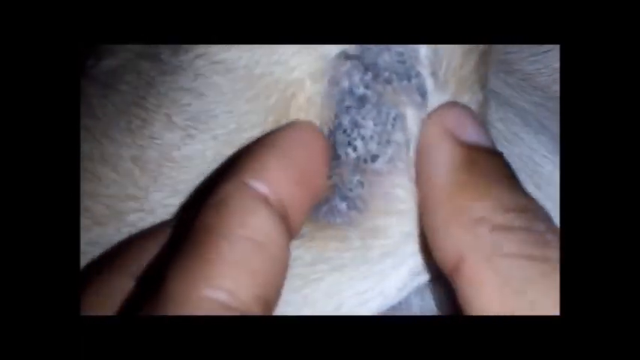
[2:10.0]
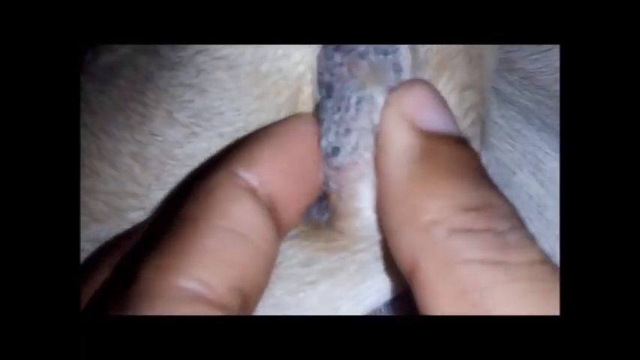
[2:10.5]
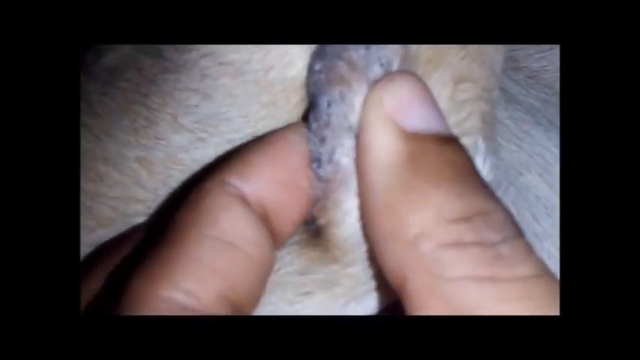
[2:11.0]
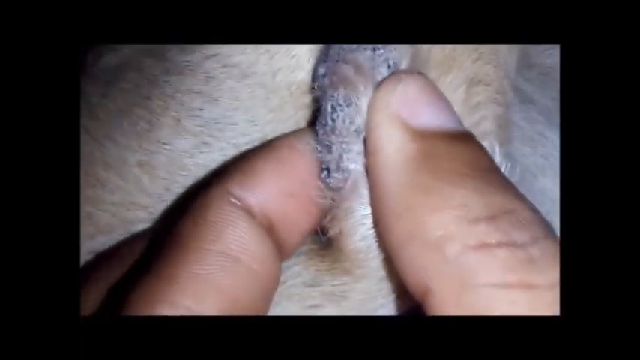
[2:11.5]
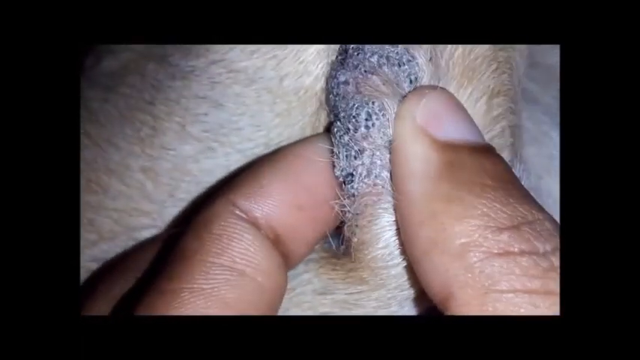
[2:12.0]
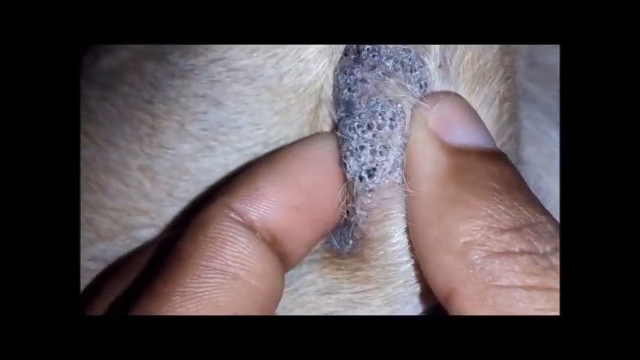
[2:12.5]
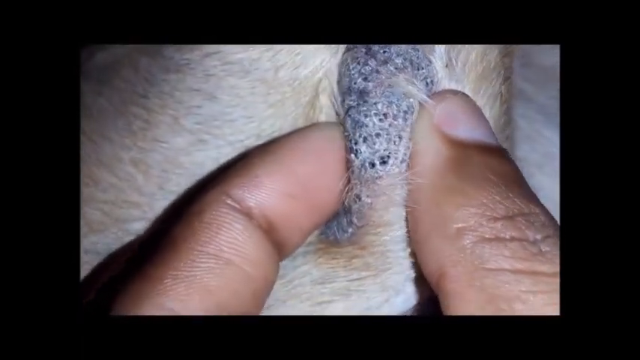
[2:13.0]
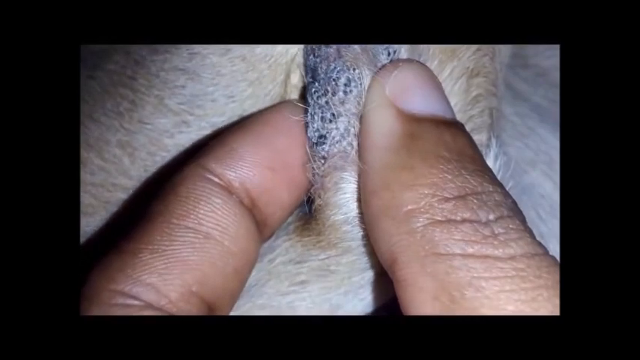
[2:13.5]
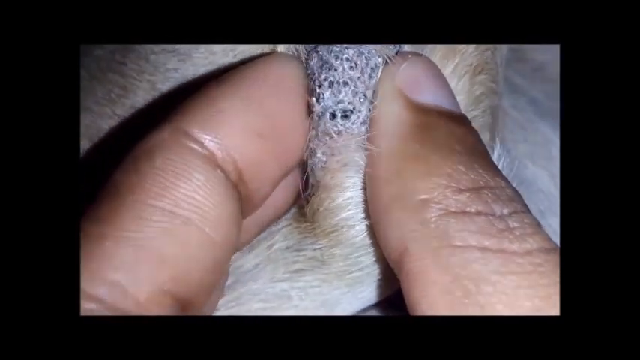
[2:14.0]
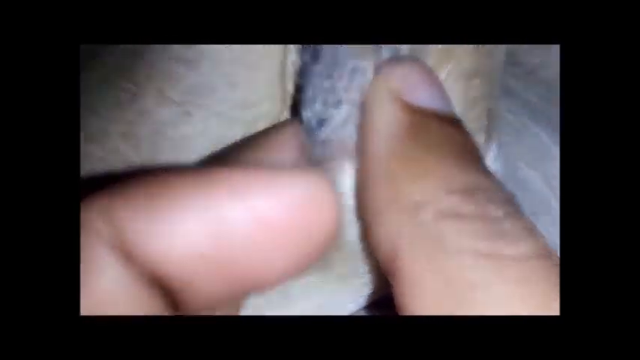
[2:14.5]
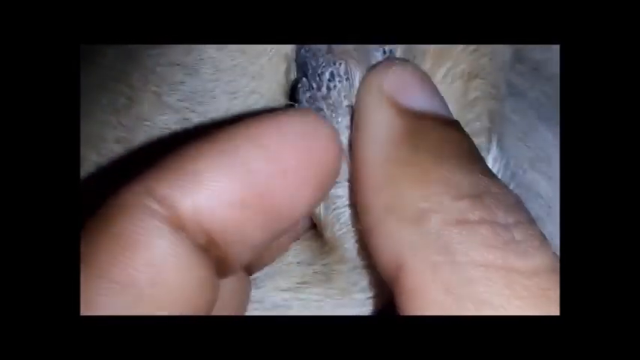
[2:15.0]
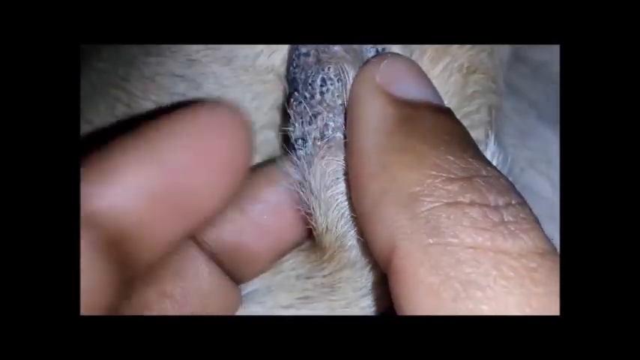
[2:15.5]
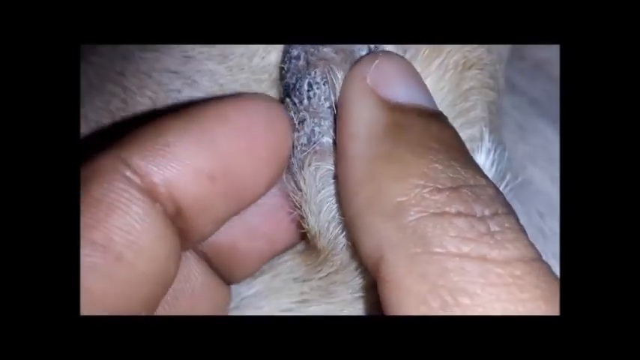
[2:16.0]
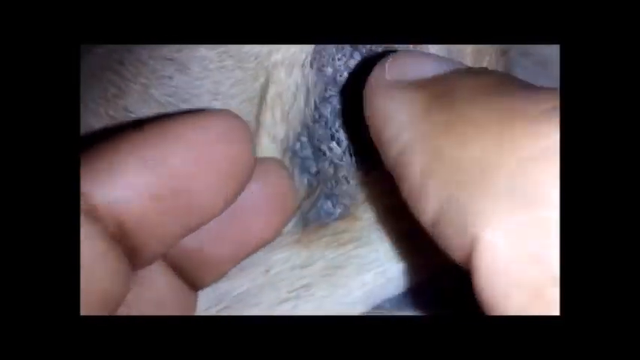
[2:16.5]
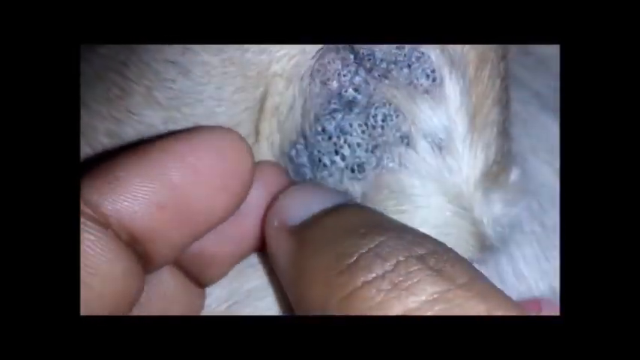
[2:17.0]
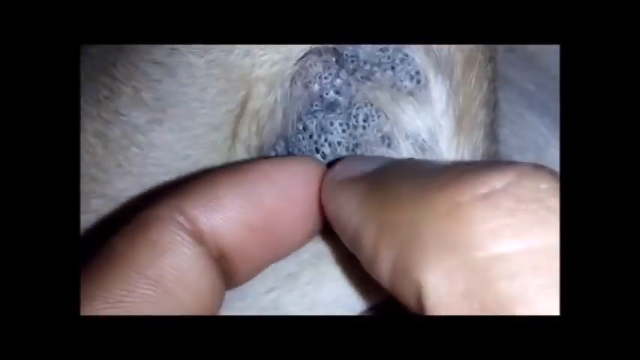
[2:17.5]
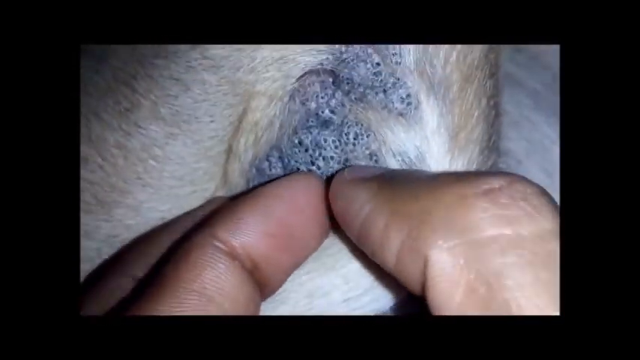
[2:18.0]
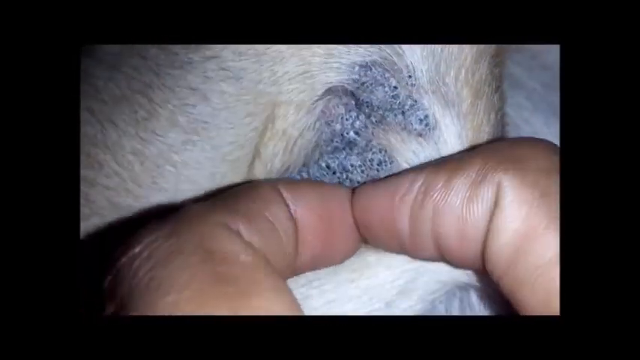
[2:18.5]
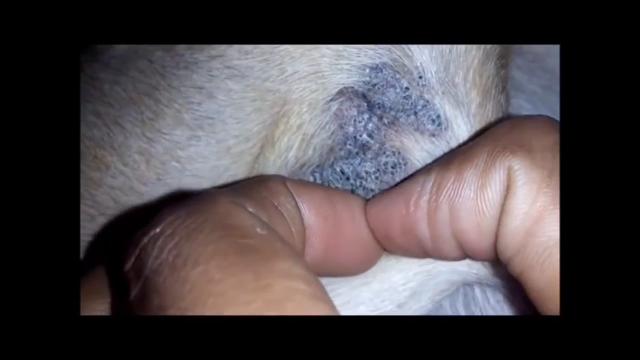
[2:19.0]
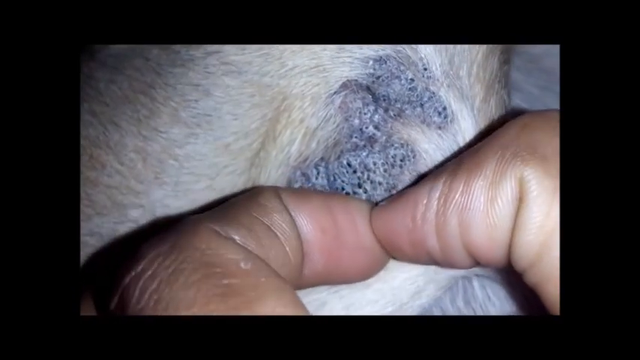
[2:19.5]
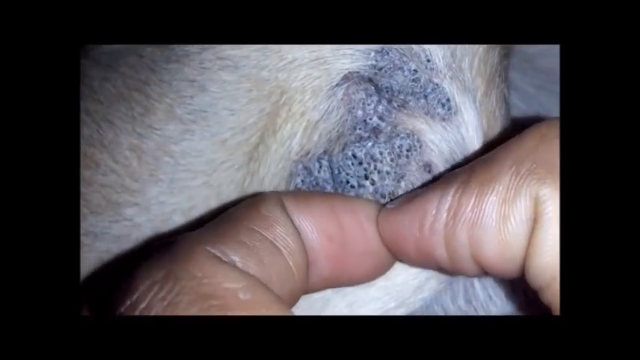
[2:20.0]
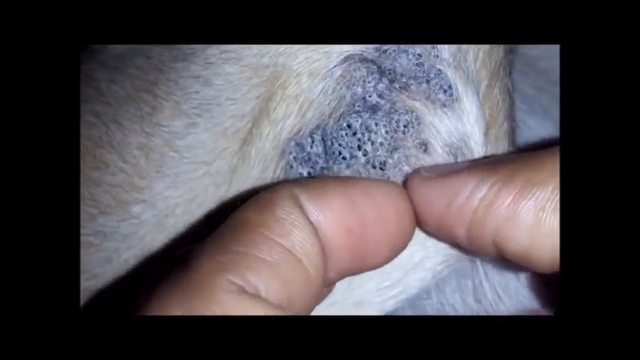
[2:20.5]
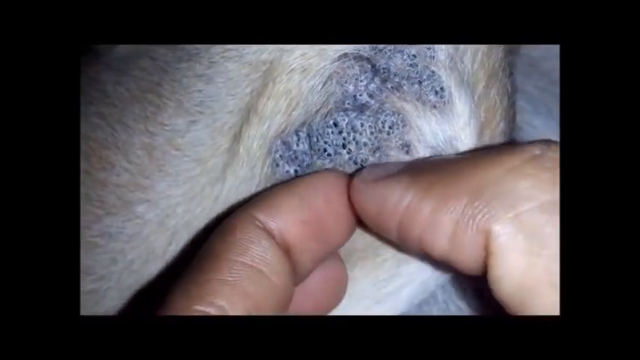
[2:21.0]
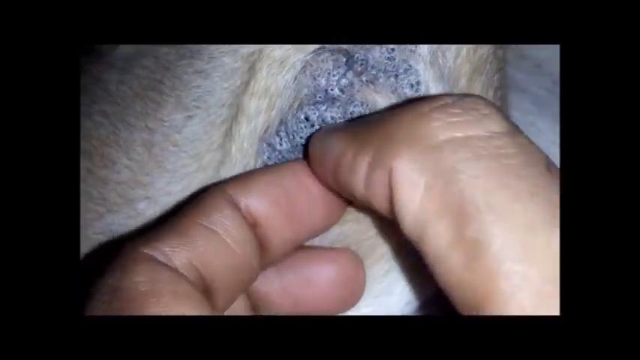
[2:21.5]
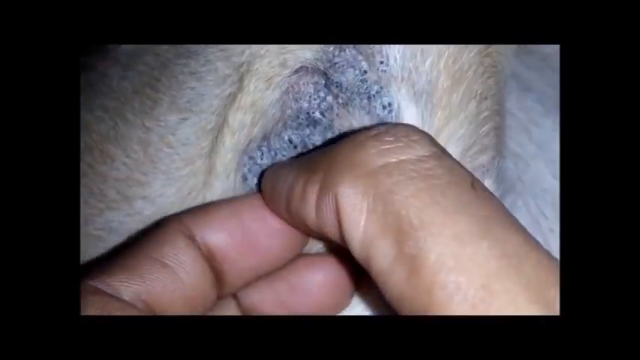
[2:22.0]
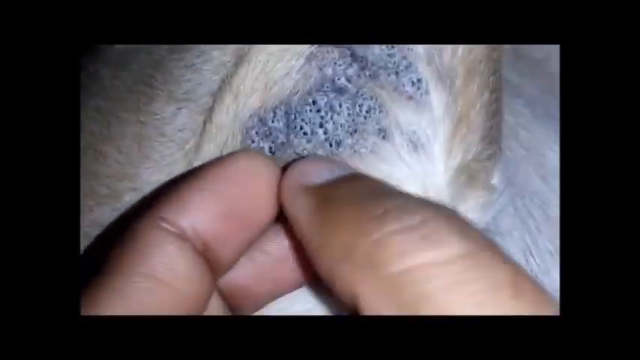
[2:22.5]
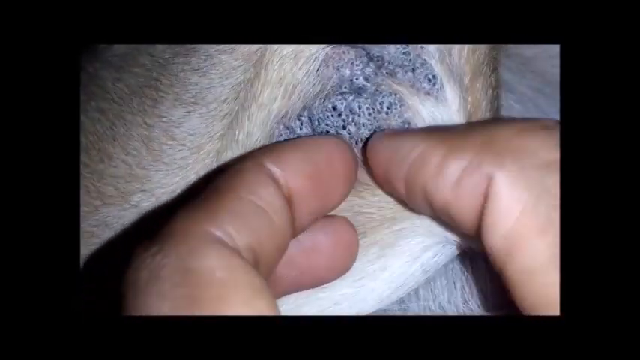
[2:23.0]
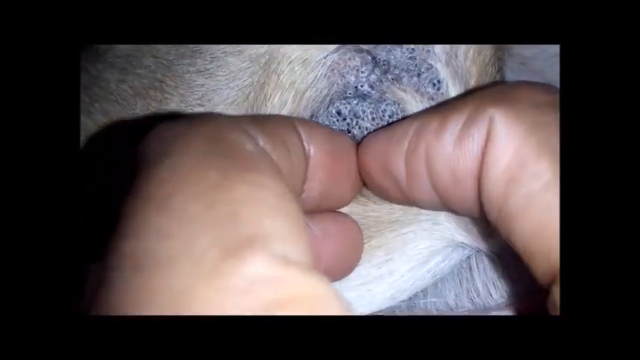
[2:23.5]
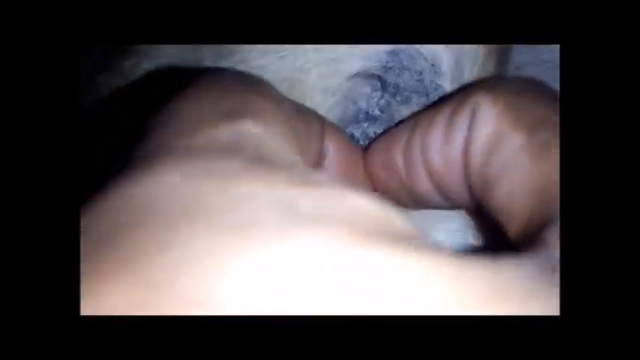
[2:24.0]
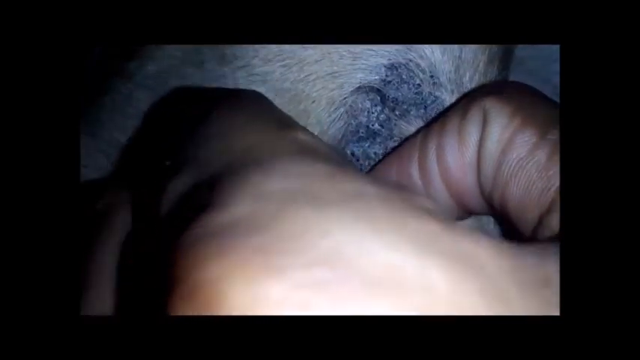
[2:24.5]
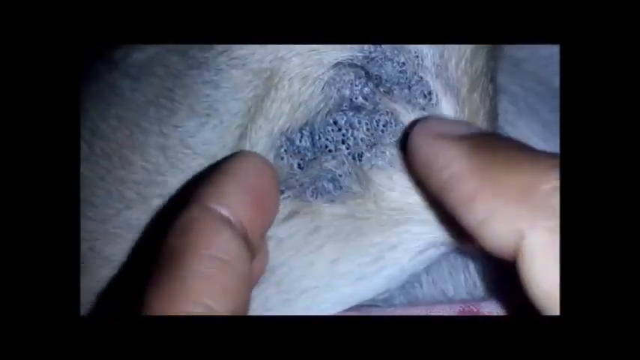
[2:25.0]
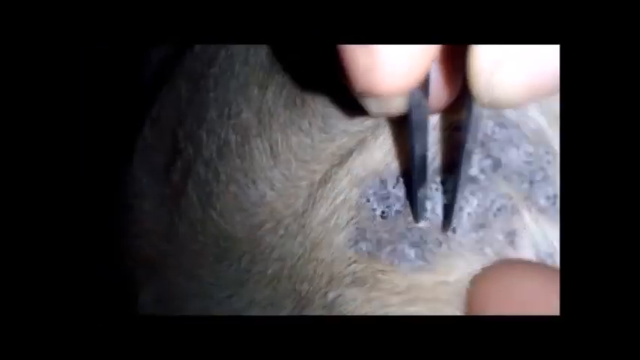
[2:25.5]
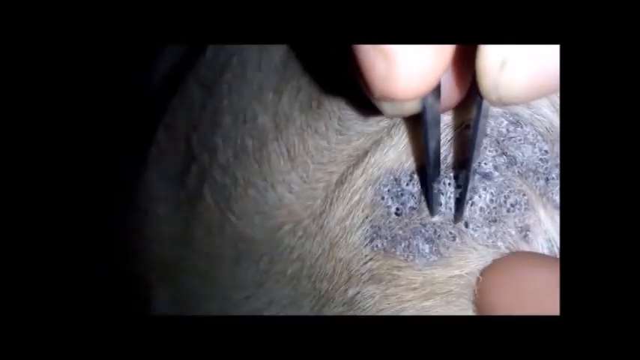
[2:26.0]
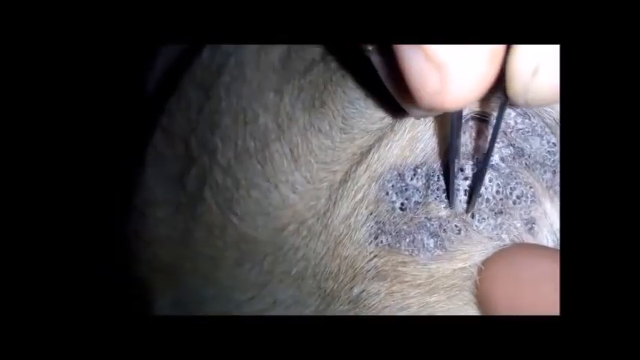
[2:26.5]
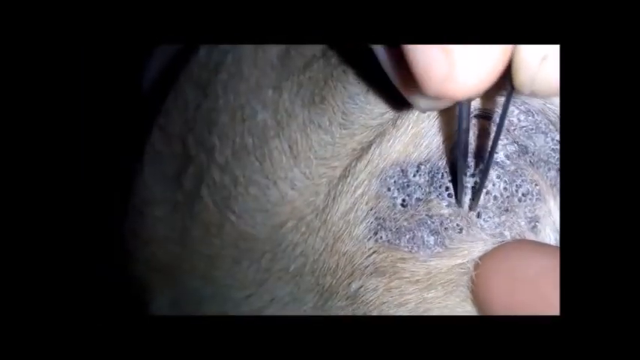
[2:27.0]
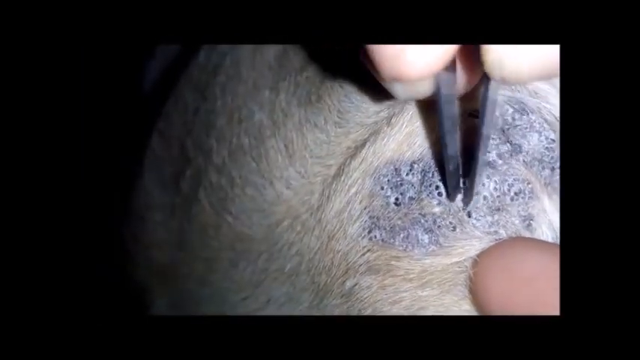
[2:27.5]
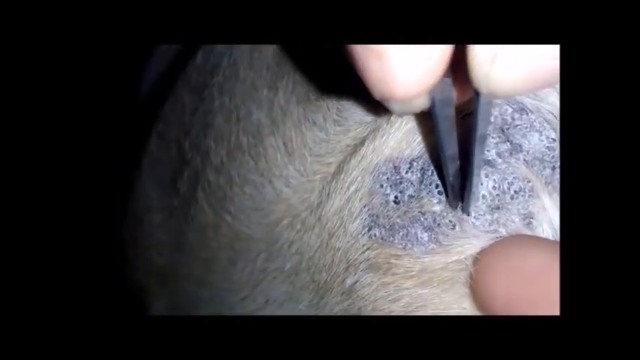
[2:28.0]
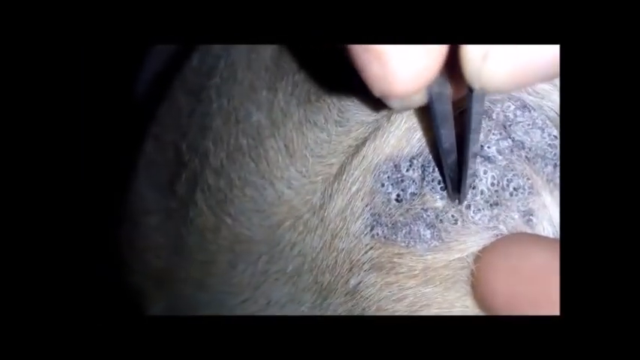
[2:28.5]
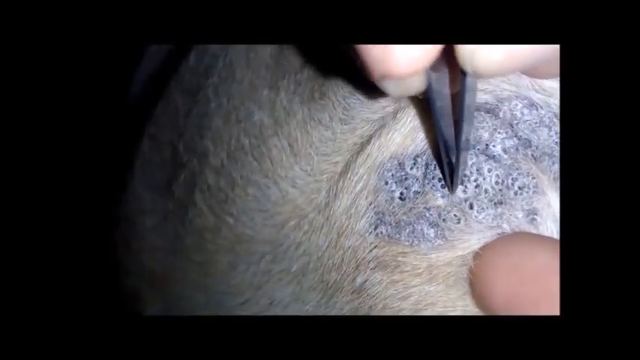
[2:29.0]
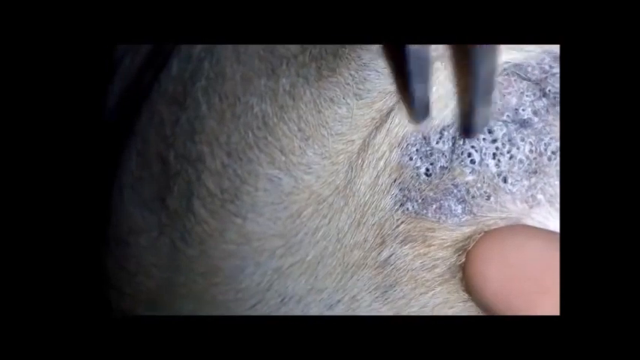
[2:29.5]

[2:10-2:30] The person holds a black and white raised lumpy lesion between their finger and thumb. The cyst or group of lesions is on an animal, with cream fur or hair around the area. The person rolls the lesion between their finger and thumb to show the raised bumpy black and white lumps, and brushes the surface with a finger to show the raised texture. He then squeezes a small section of the lump between his thumb and finger, which looks very painful for the animal. Then they take a pair of tweezers and squeeze together some of the black lumps on the skin.